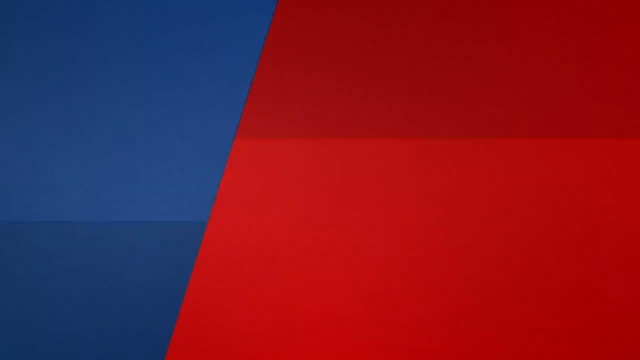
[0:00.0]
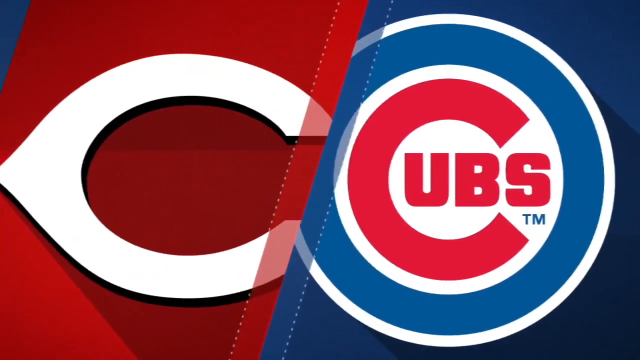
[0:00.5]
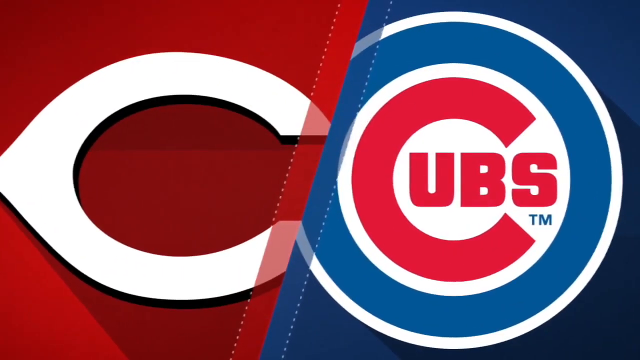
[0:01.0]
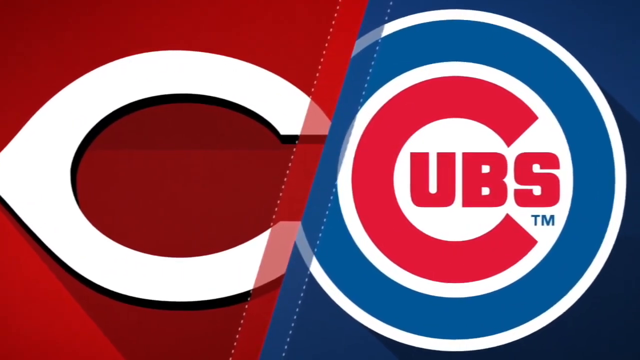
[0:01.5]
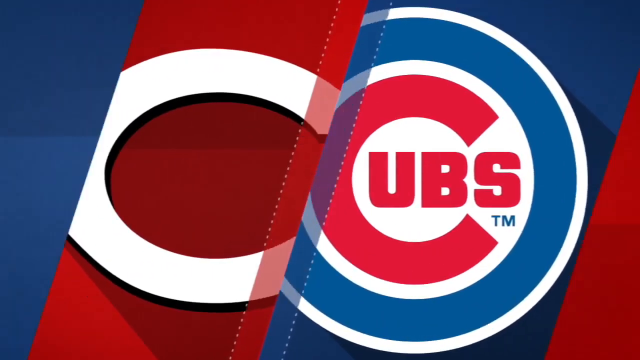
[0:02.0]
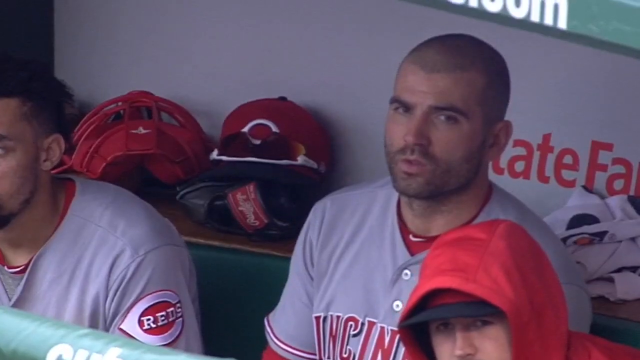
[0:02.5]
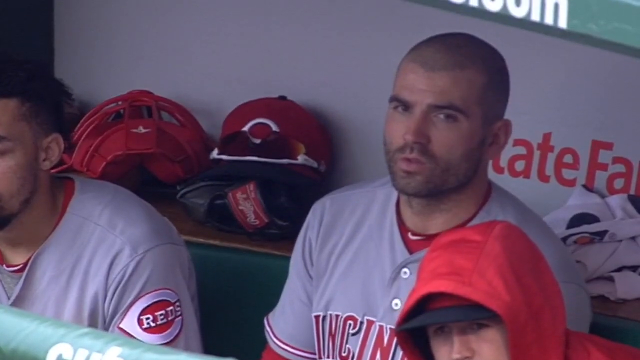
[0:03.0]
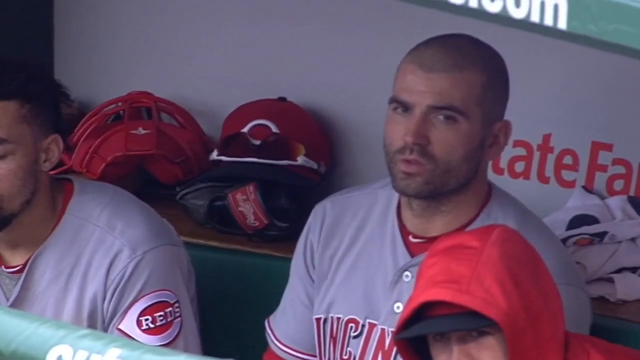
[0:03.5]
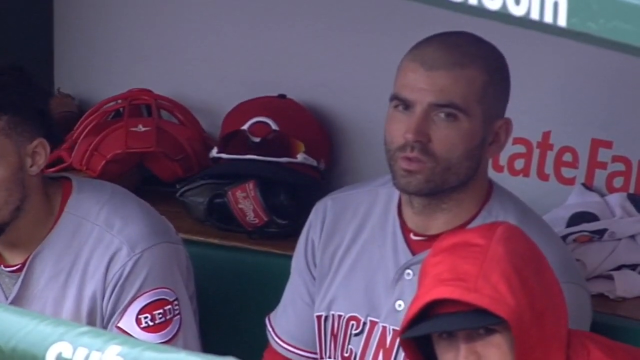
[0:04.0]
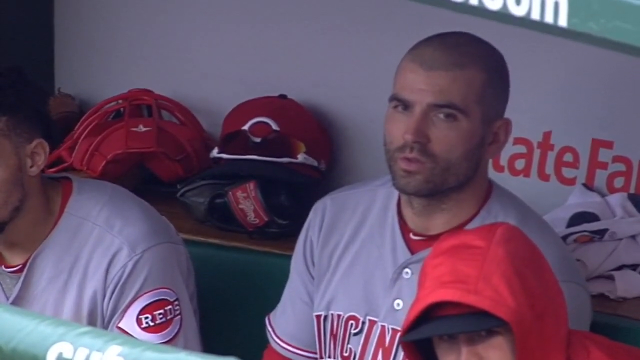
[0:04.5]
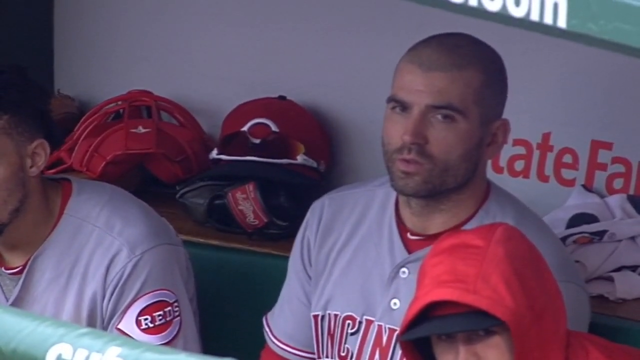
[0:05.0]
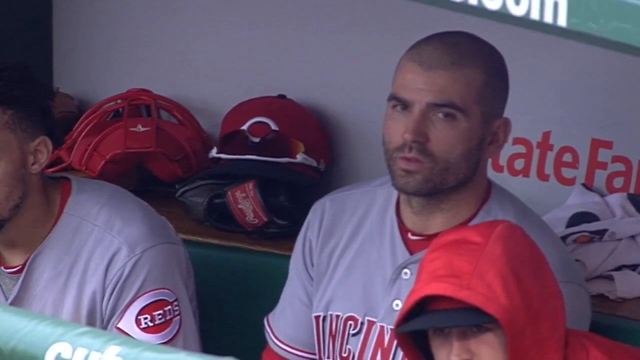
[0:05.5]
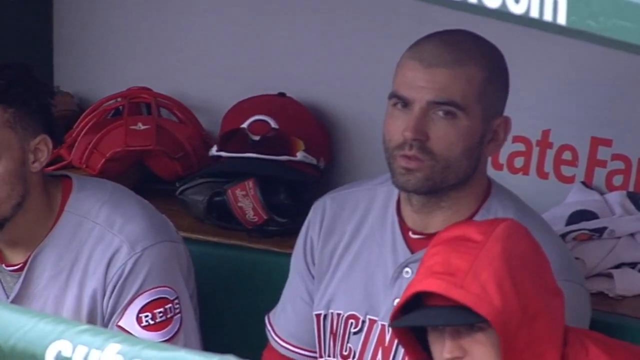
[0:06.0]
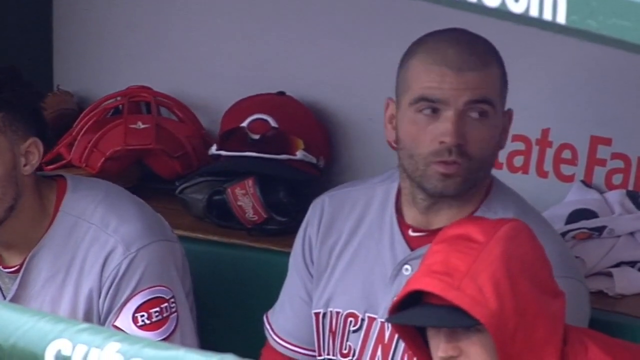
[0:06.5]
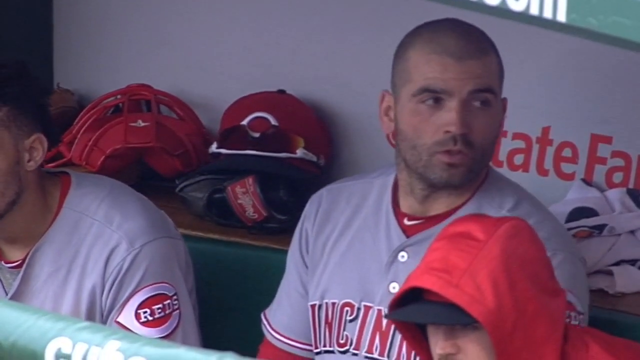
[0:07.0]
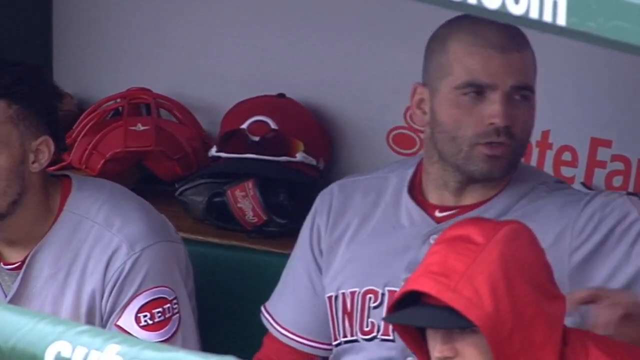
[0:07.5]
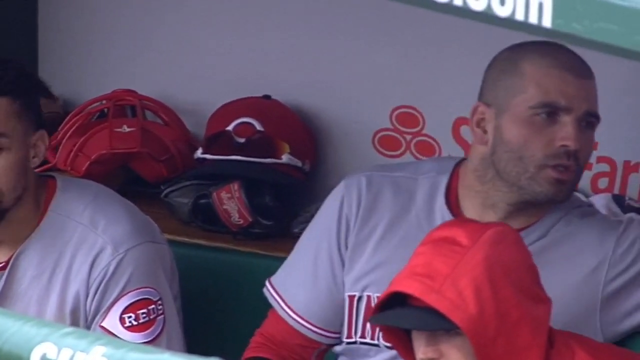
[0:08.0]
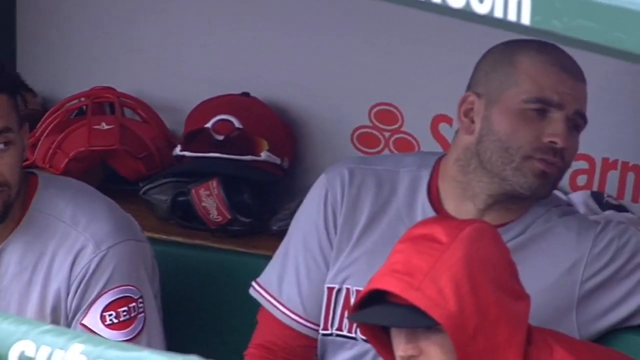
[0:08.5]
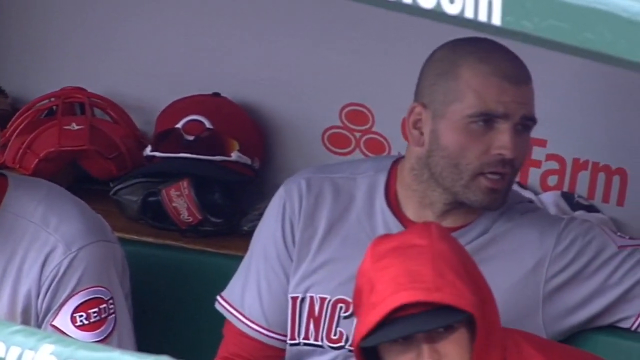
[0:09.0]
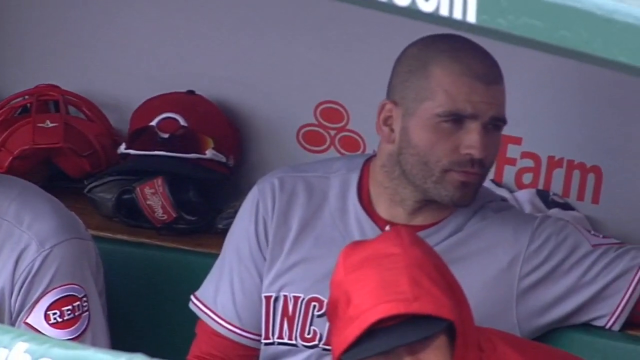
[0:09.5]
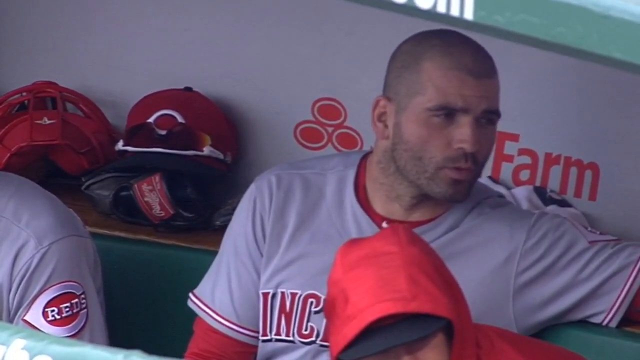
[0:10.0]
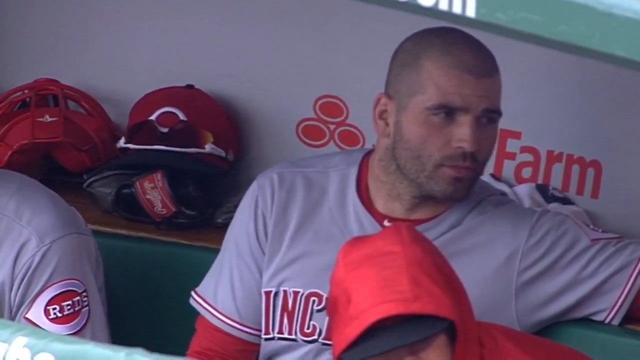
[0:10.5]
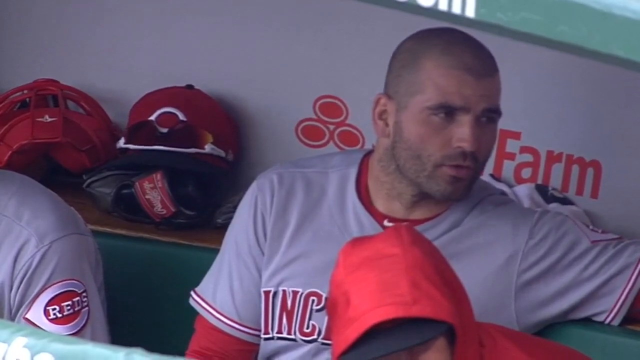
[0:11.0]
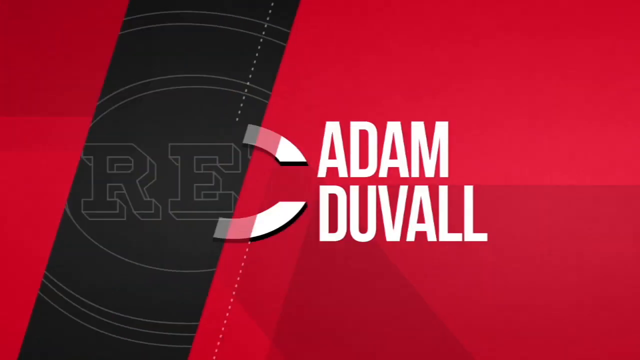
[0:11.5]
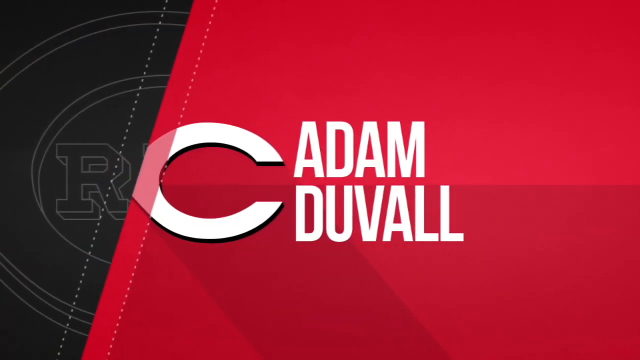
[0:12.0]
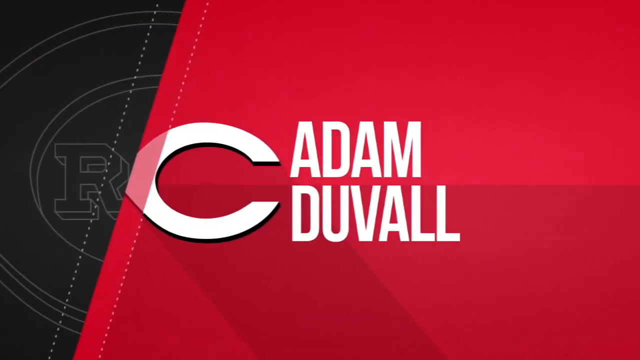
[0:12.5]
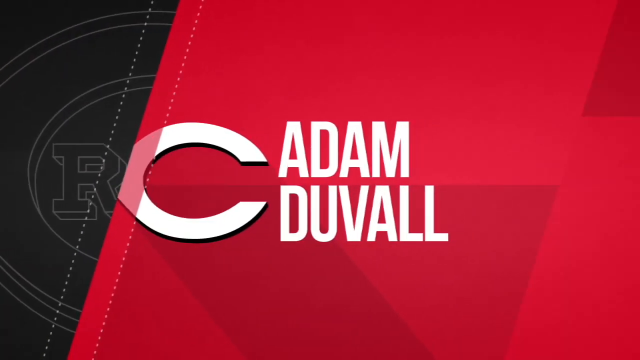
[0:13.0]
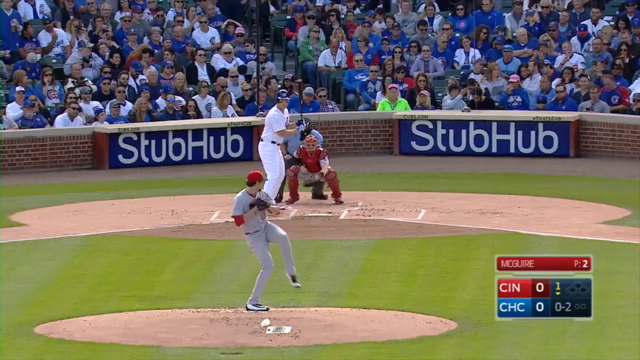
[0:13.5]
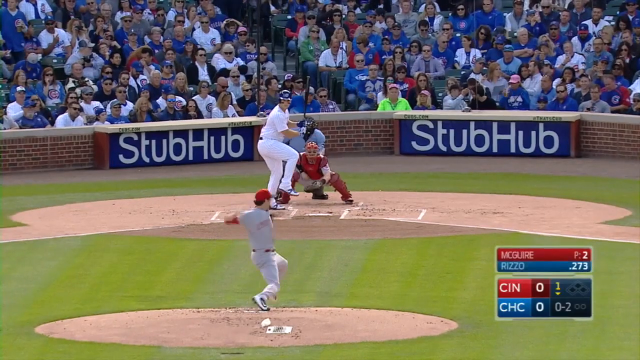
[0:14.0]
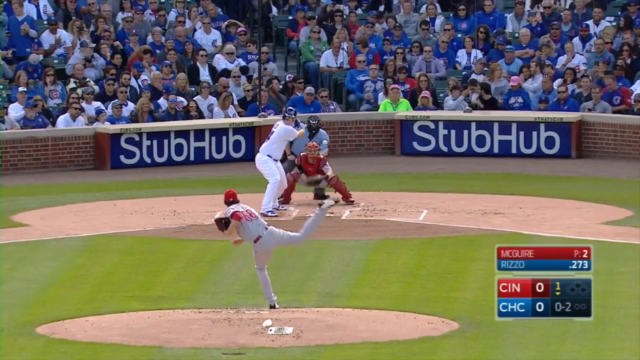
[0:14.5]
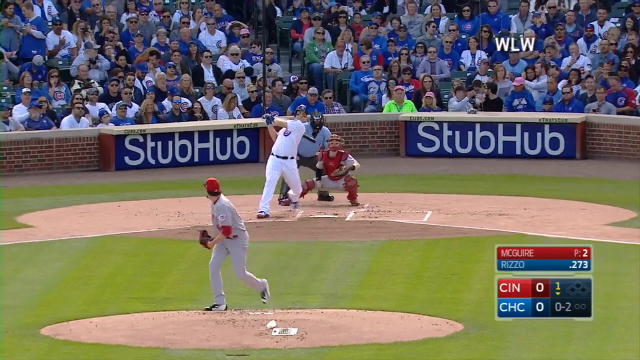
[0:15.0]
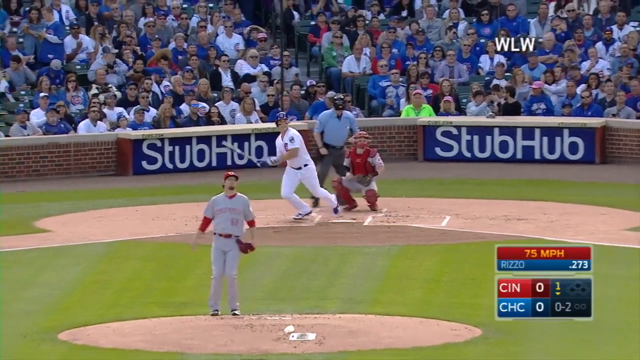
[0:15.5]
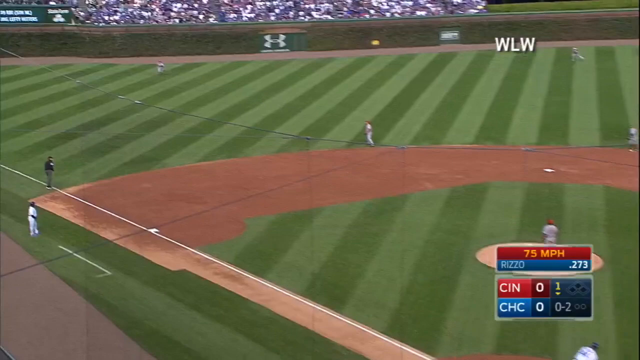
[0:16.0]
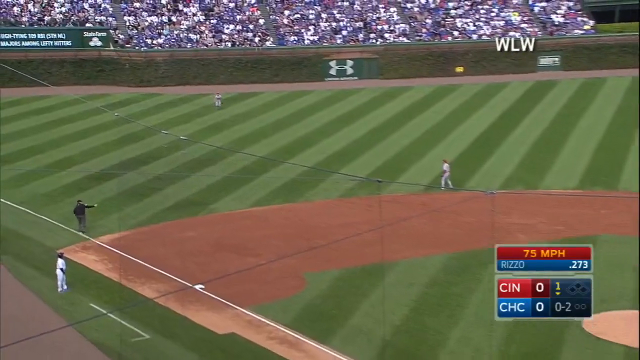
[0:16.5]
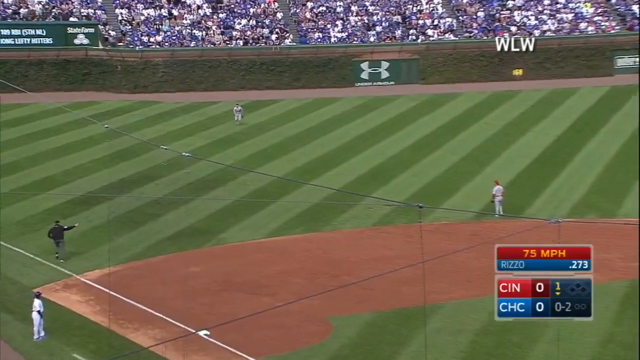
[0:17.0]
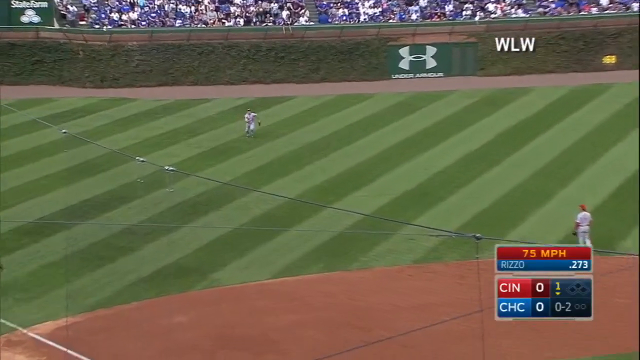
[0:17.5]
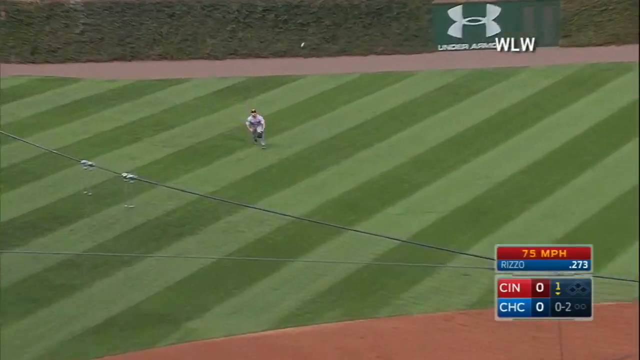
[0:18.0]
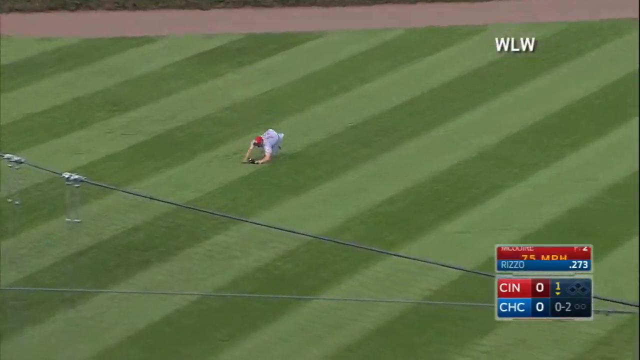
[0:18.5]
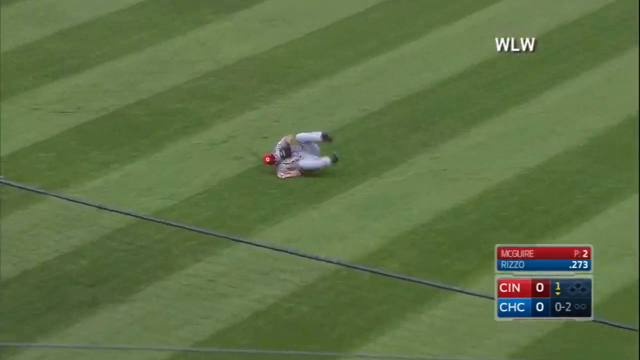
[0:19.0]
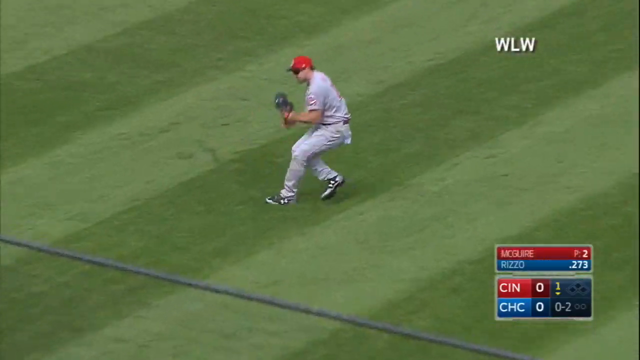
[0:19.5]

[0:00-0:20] The screen opens split by a mild diagonal line: roughly the left third is blue and the other two thirds are red, with the dividing line slightly further left at the bottom than at the top. The blue is pale in its top two thirds and darker in the bottom third, while the red is lighter in roughly the bottom two thirds and slightly darker at the top. A cut swaps the colors, putting red on the left and blue on the right. On the left is a white letter C with a black border. On the right is a circle with a thin white border and a thicker blue ring set inside it; its center has a white background with a red letter C, and within the center of the C are the letters U, B, S, also in red. Below the S, in much smaller blue font, is a TM trademark mark. The video then cuts to the dugout of a baseball team, where a player appears on the right half of the screen and leans over to his left side to talk to somebody.